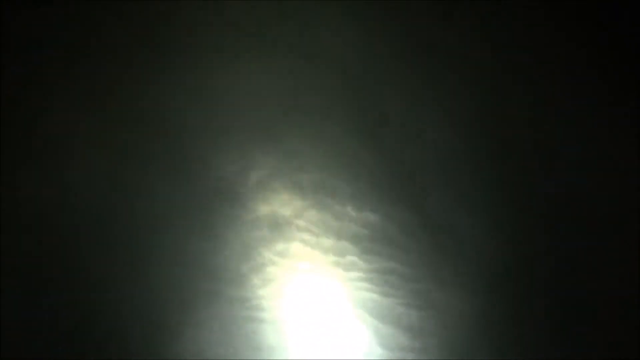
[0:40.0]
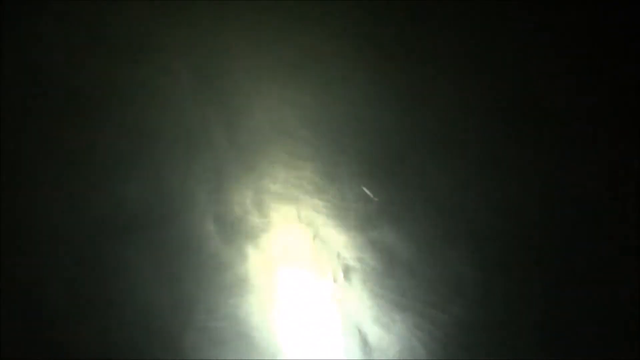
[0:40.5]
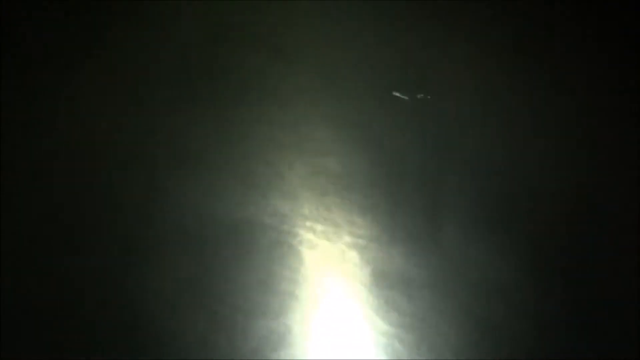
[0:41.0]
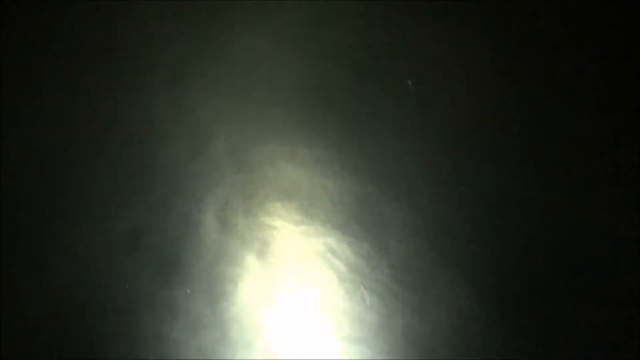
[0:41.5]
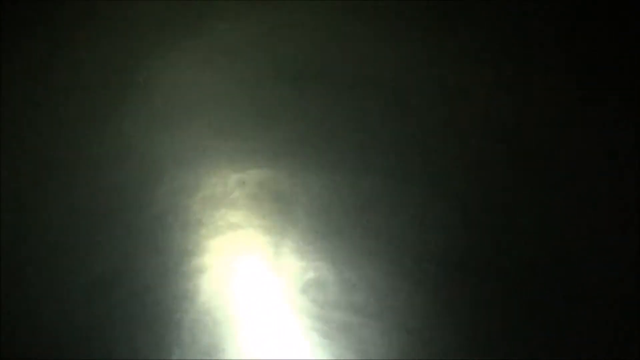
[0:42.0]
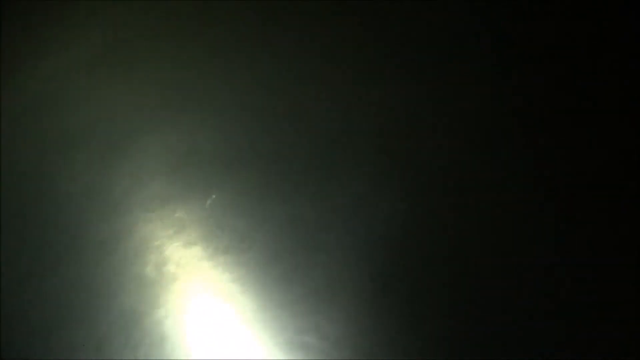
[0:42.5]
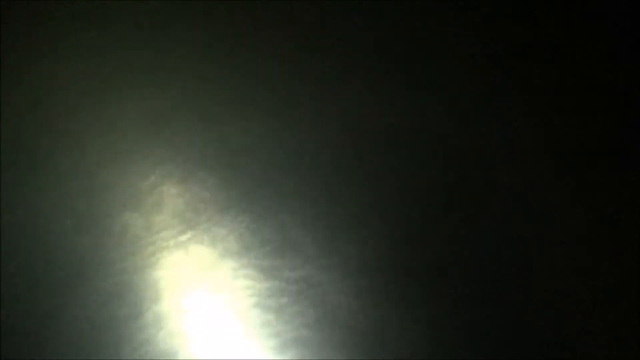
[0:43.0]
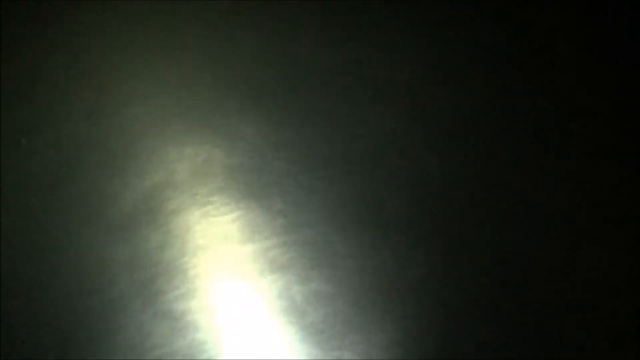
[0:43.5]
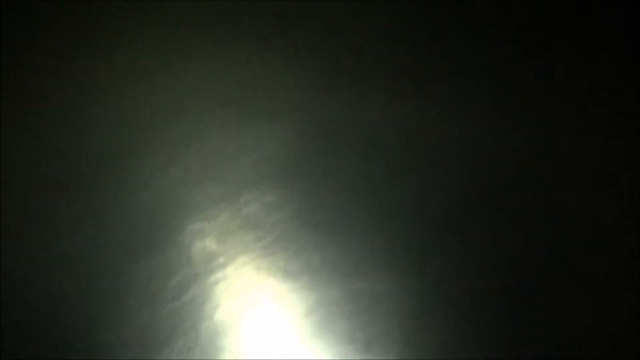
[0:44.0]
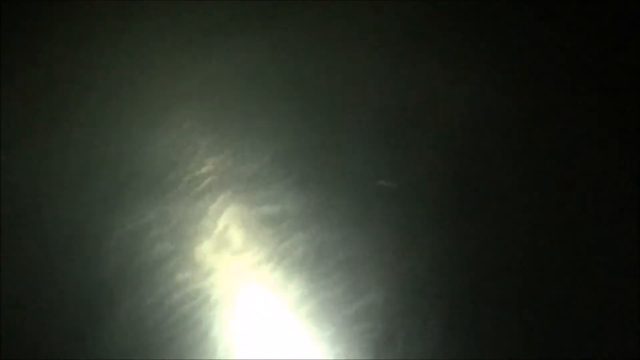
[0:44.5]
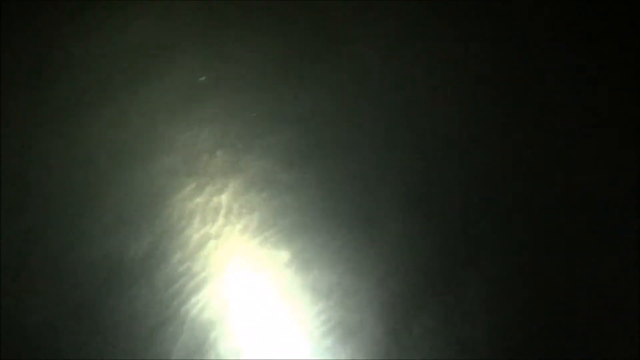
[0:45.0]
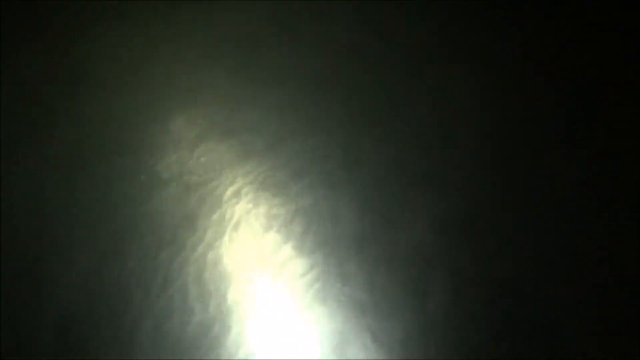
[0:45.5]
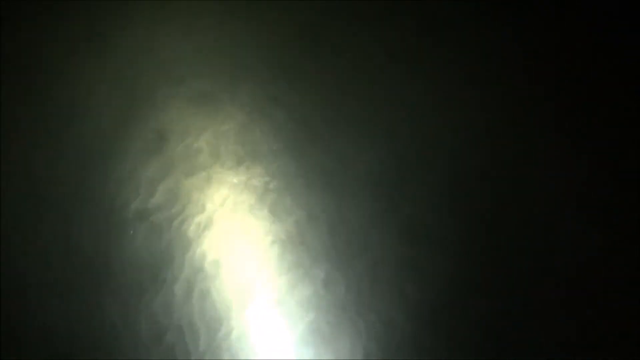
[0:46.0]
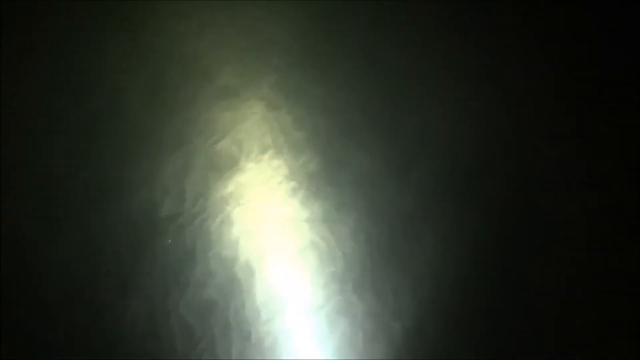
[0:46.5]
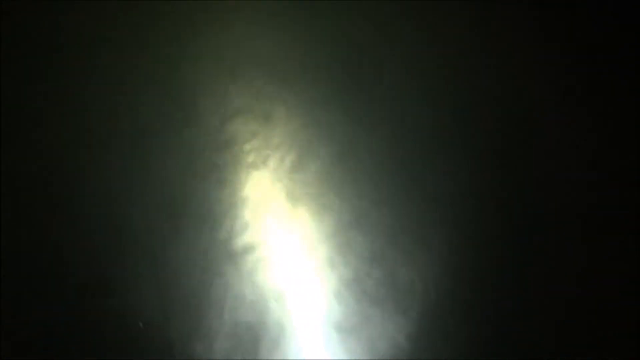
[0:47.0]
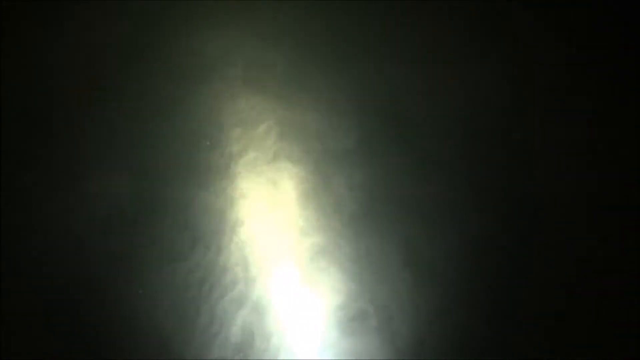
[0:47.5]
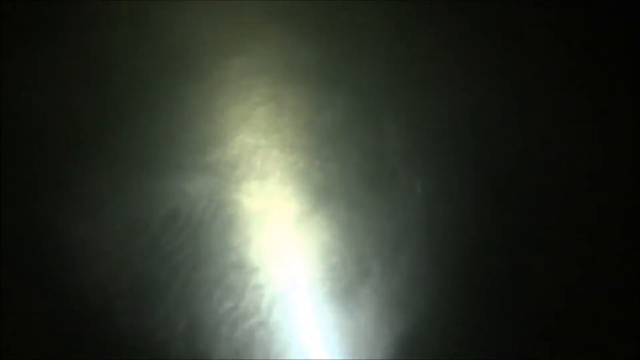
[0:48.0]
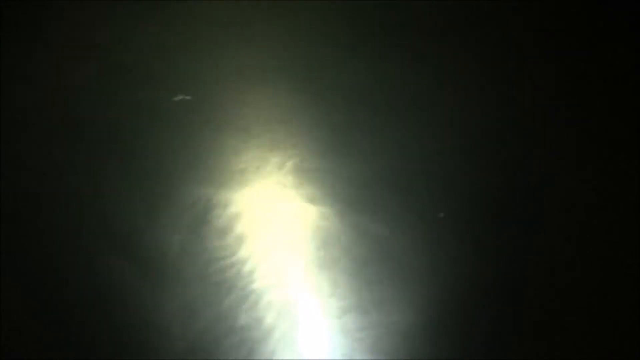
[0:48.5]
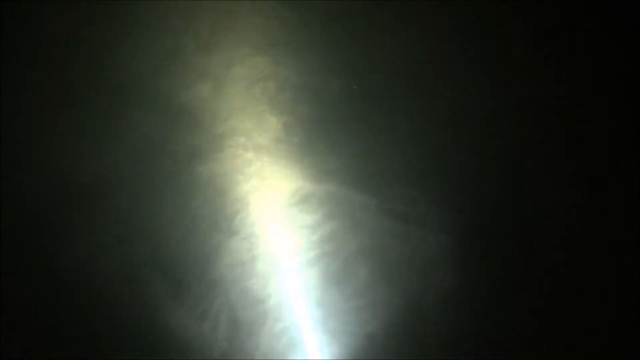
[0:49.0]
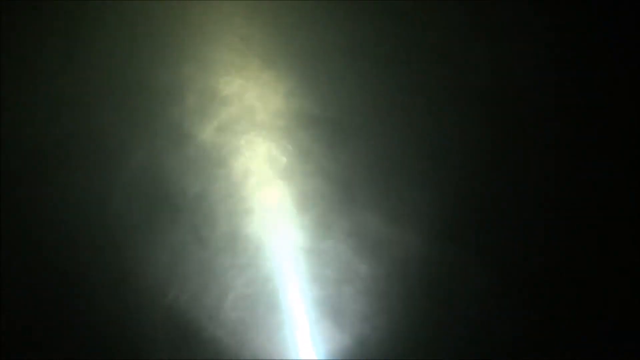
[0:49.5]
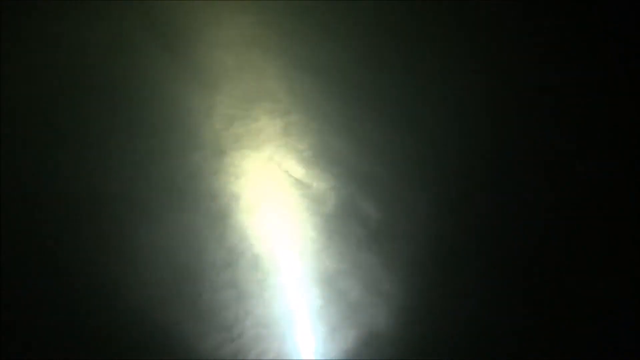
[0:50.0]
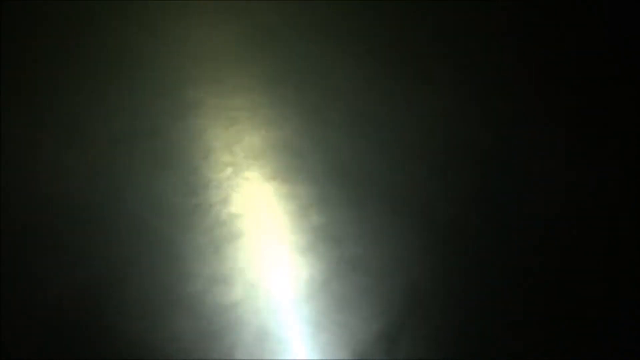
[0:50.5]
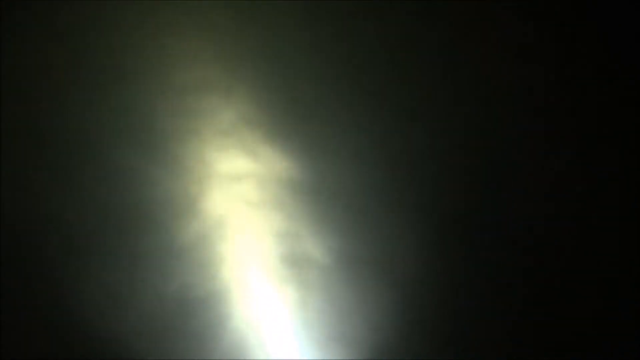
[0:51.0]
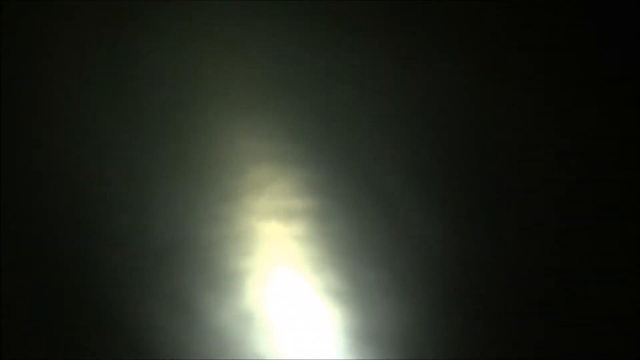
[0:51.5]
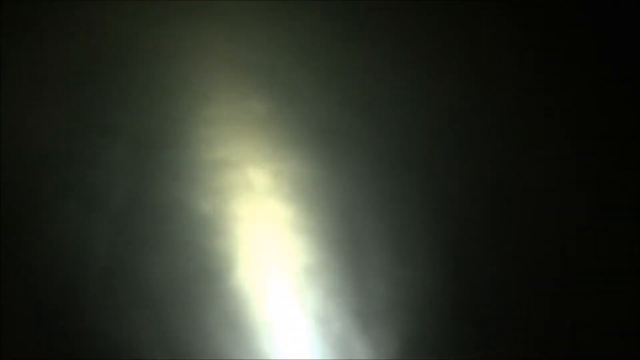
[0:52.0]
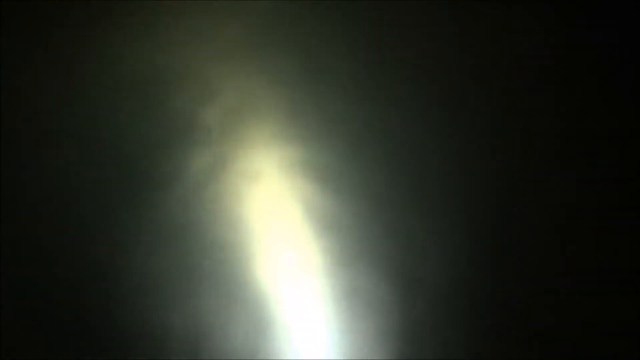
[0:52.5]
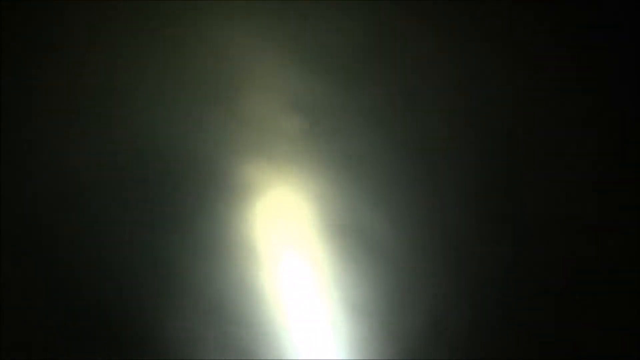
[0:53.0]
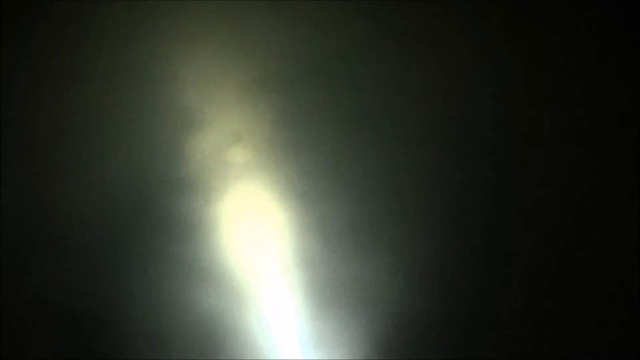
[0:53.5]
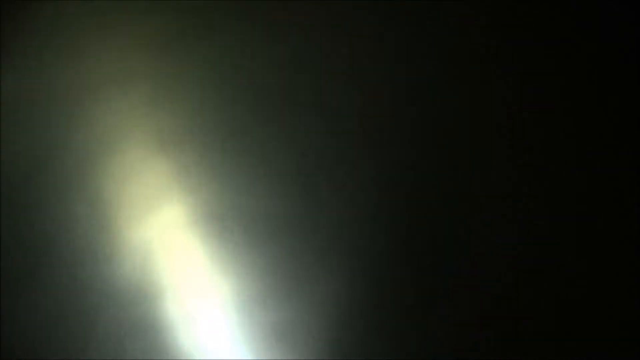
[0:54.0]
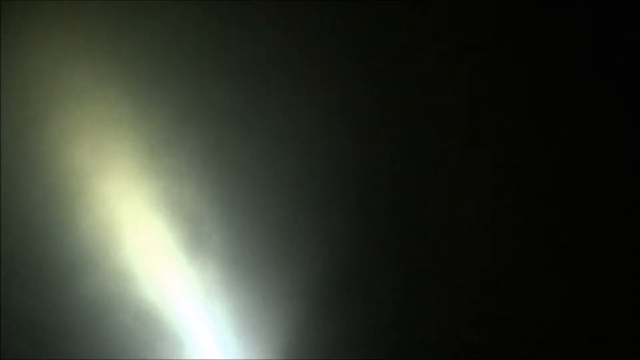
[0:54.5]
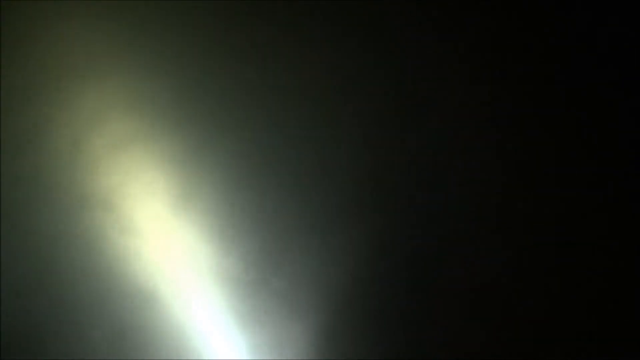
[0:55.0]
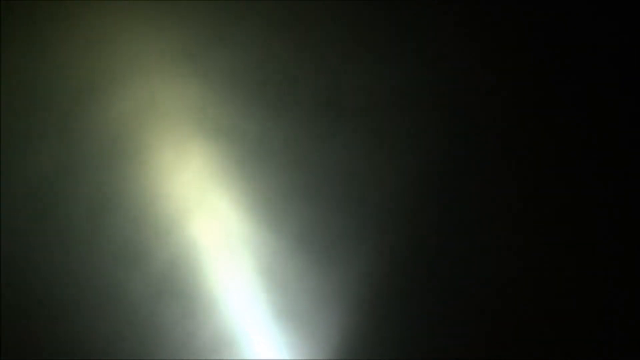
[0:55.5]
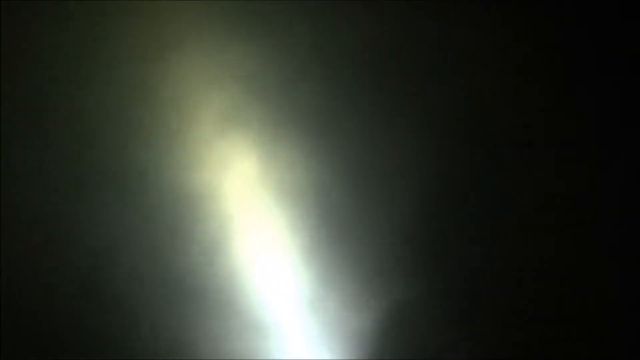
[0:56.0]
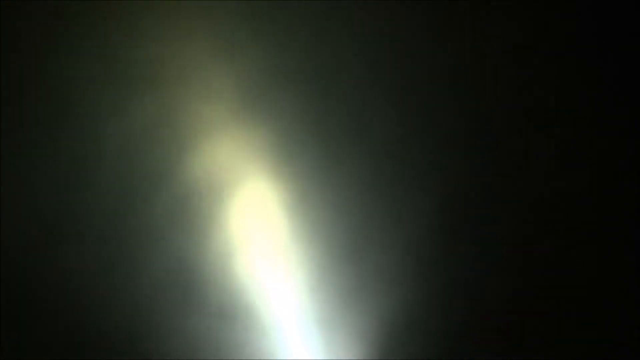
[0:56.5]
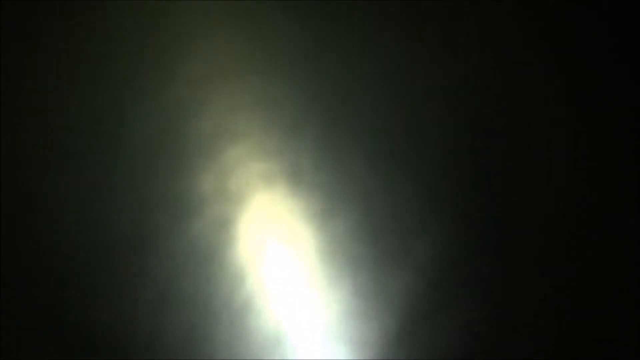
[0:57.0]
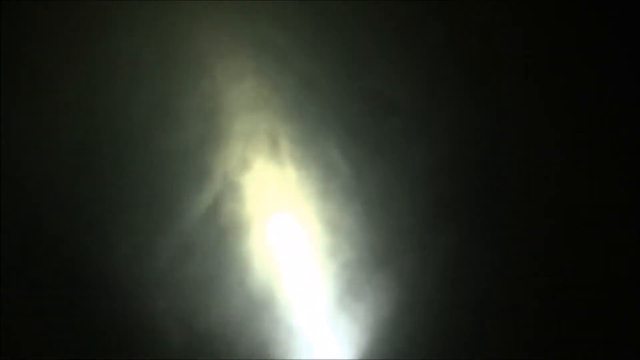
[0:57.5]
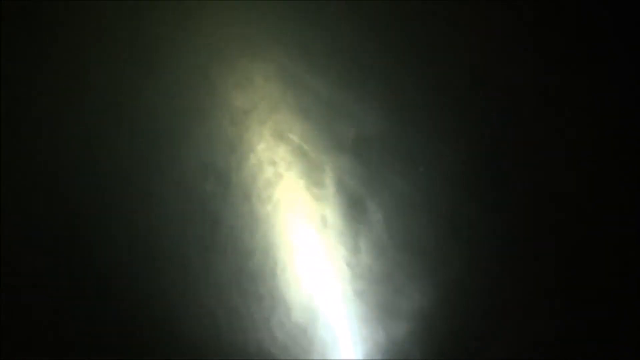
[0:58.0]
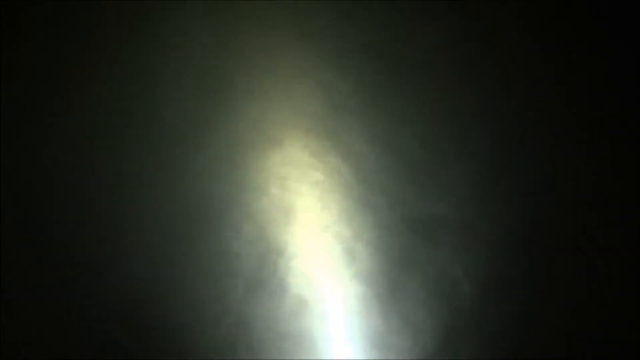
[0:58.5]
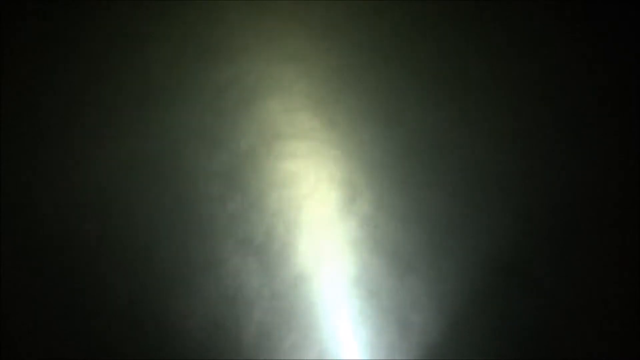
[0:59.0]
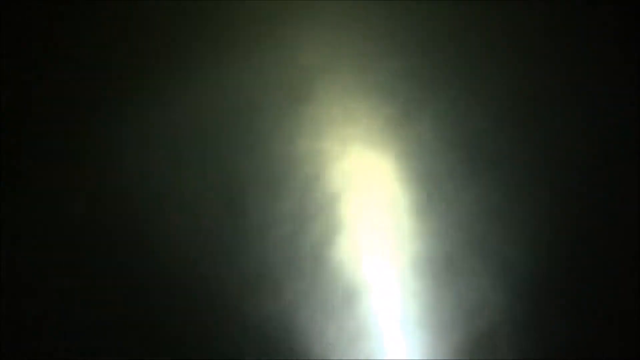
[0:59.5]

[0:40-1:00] The water is recorded at night with a light pointing toward it, making it shine; only the movements of the water are visible.